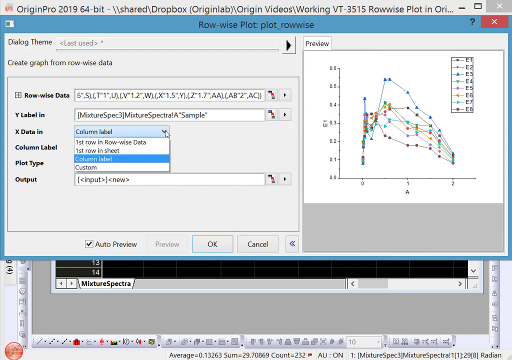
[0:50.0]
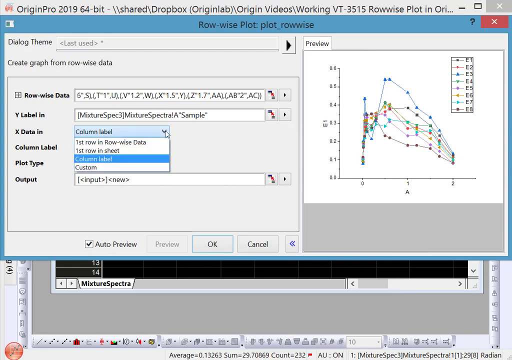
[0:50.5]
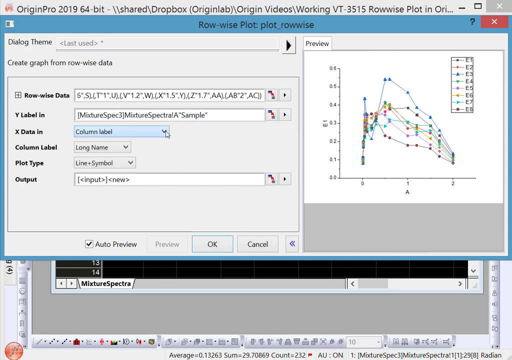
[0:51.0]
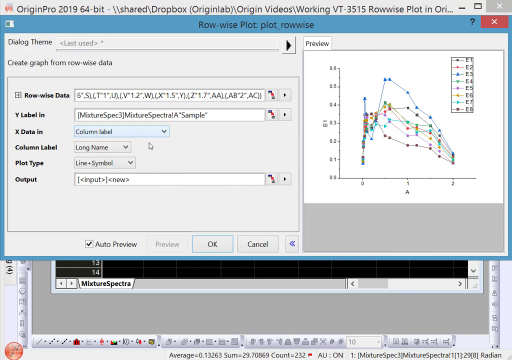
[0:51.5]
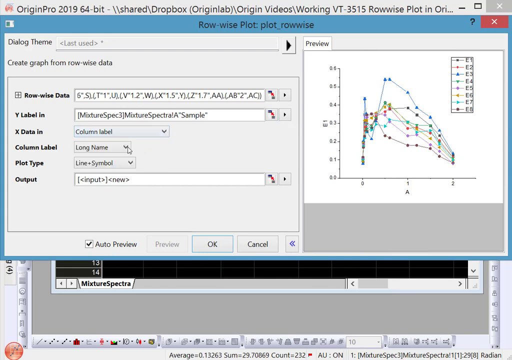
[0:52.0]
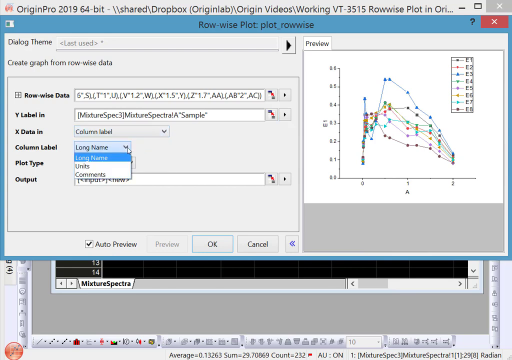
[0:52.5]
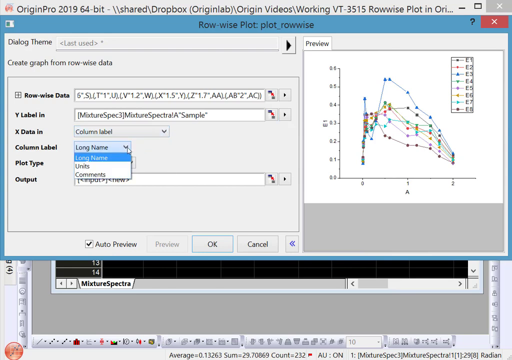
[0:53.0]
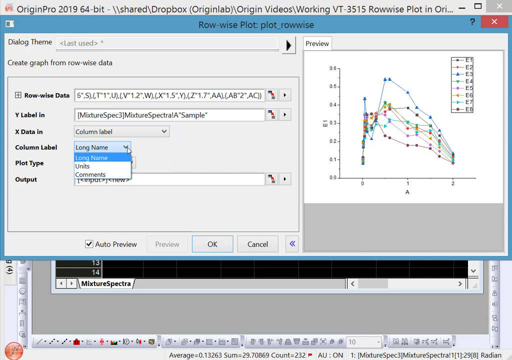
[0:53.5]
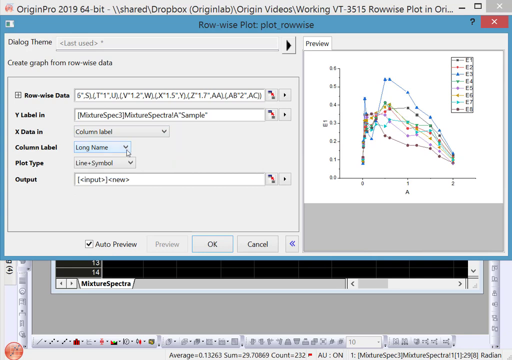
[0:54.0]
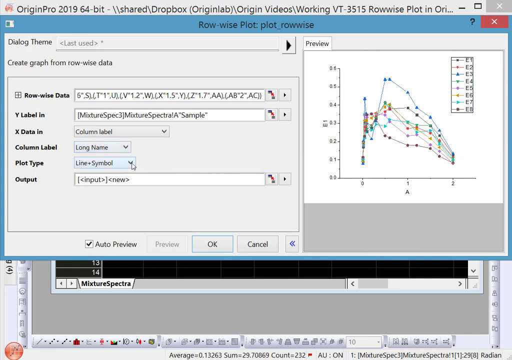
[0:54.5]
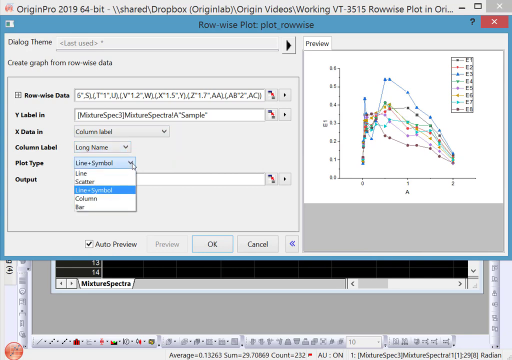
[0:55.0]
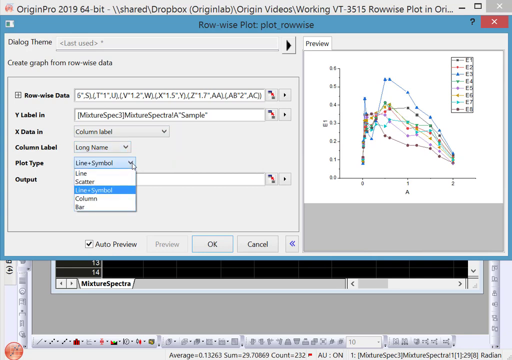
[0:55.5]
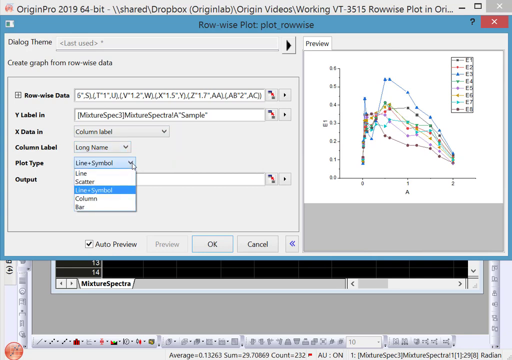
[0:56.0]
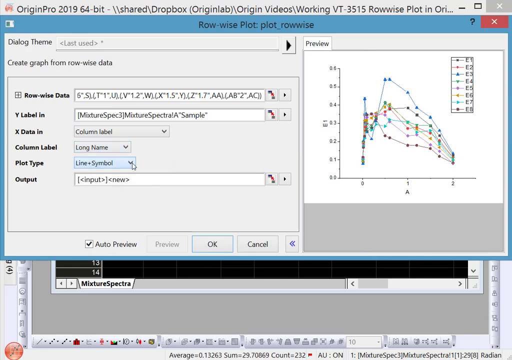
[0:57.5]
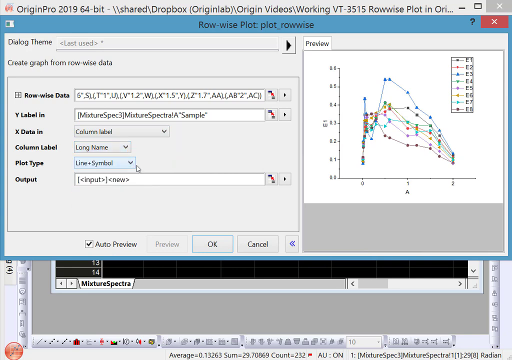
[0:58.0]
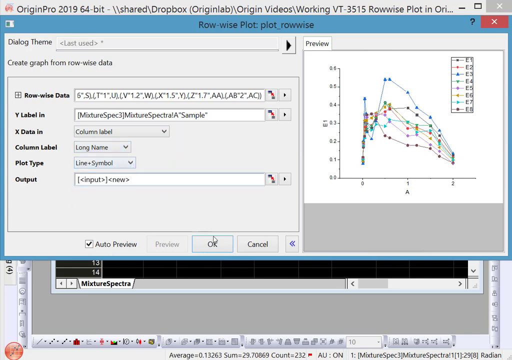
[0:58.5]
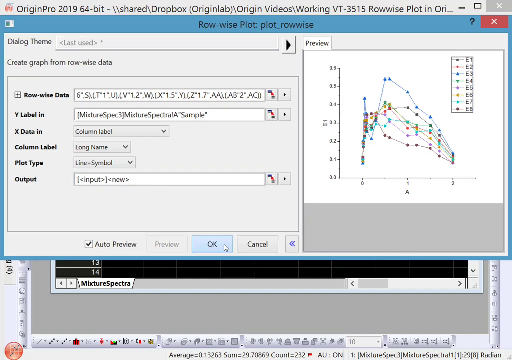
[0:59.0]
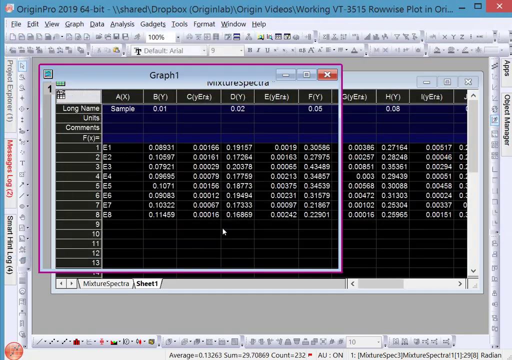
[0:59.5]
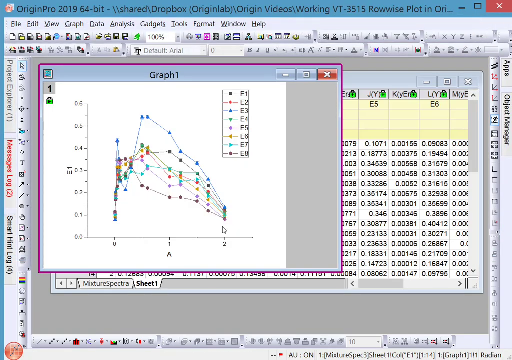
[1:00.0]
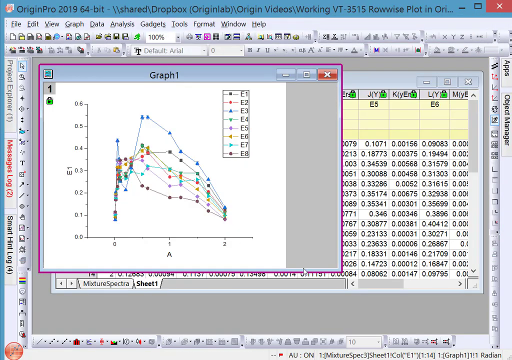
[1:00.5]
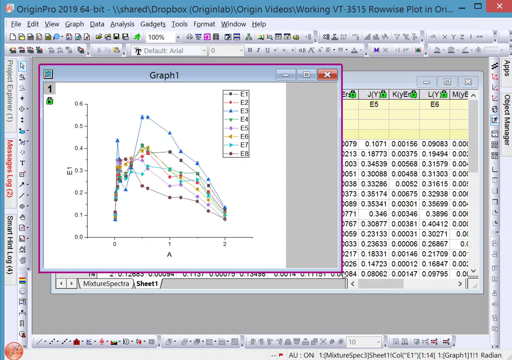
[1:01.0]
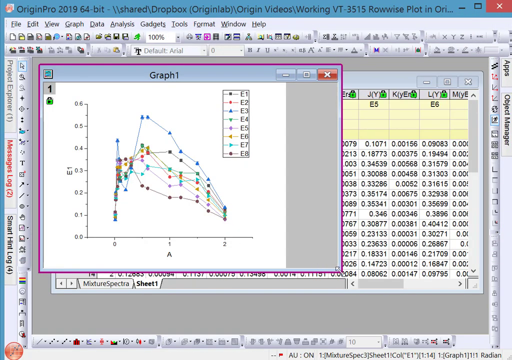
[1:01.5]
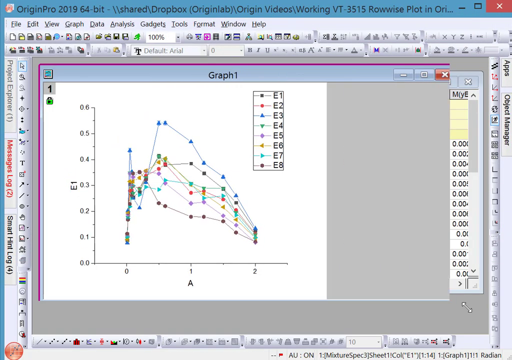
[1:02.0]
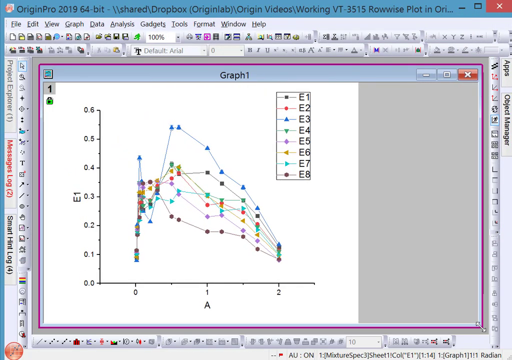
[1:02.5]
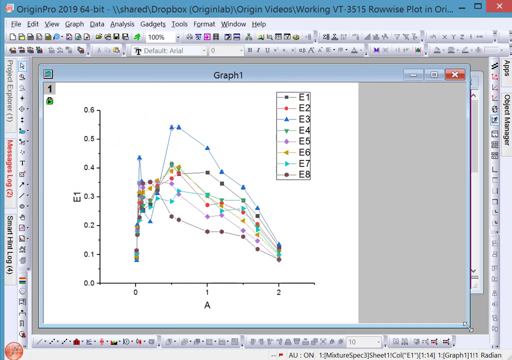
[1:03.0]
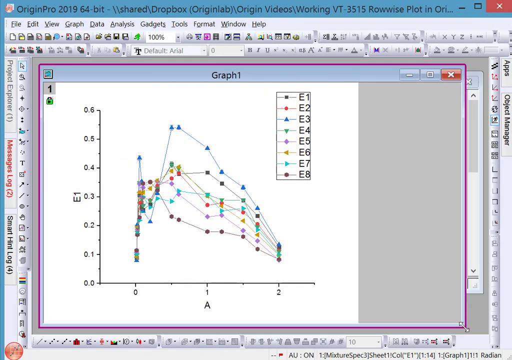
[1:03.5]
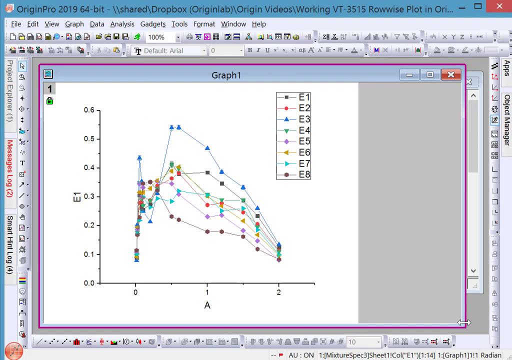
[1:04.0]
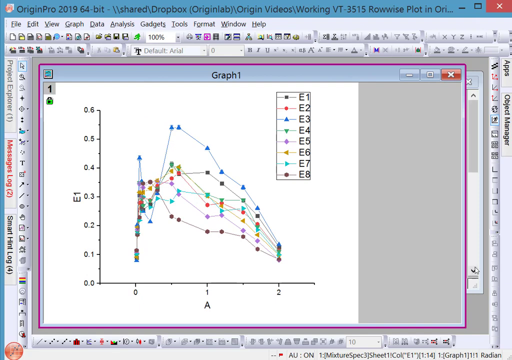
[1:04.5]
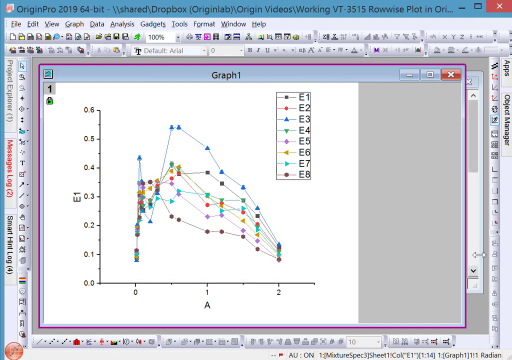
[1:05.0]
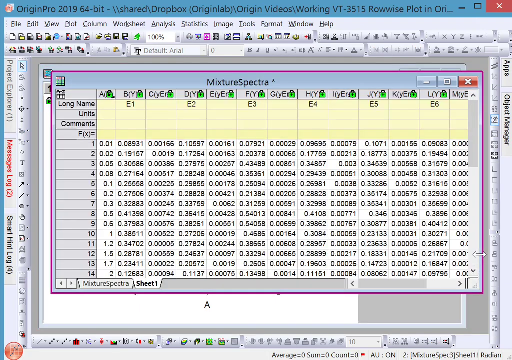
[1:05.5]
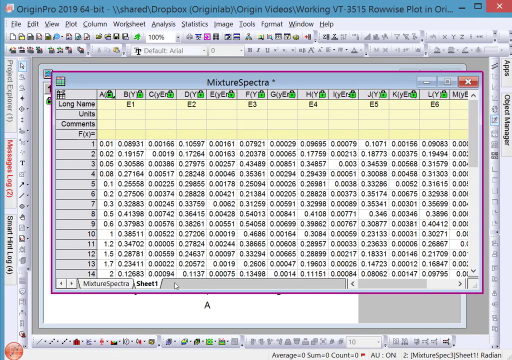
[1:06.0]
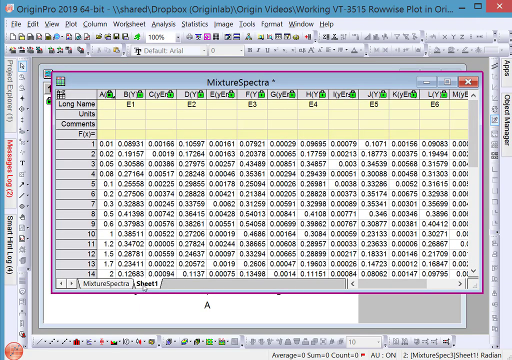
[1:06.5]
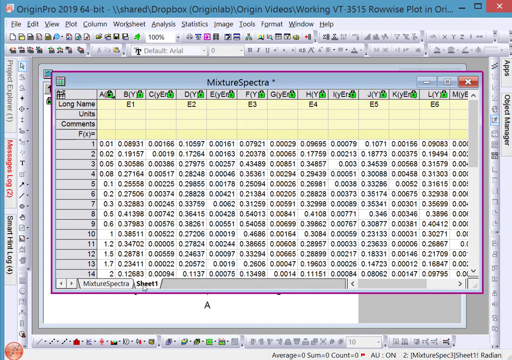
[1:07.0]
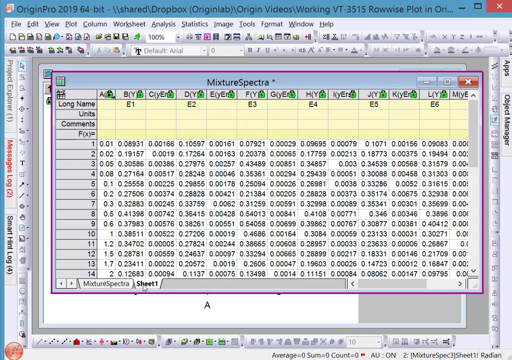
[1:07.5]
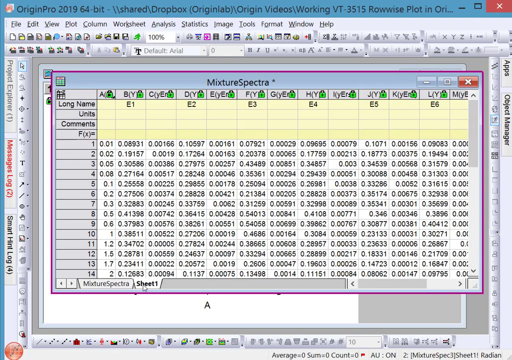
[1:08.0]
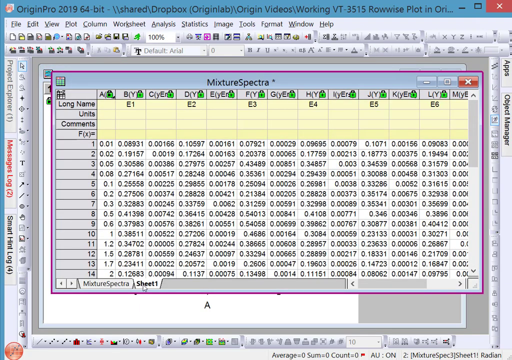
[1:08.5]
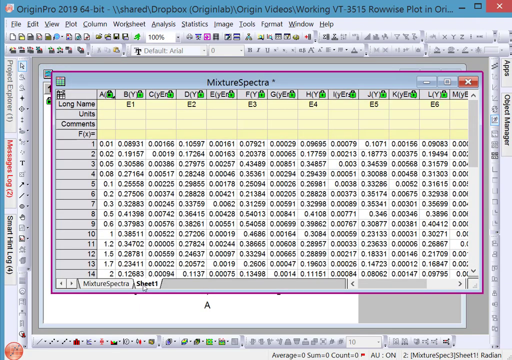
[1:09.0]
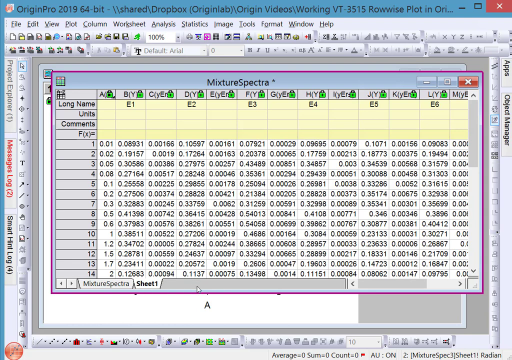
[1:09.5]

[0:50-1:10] A pop-up titled 'row-wise plot: plot _rowwise' is open. The cursor is over a drop-down menu called 'x data', in which 'Column Label' is currently selected and highlighted in blue. The drop-down menu closes, and the cursor moves down to open a different drop-down menu just below, labelled 'Column Label', which is set to 'Long Name'; it is briefly opened and then closed. The cursor then moves down to a drop-down menu titled 'Plot Type', currently set to 'Line and Symbol', which is opened and closed again. The cursor moves down to the right and clicks an OK button. The pop-up closes and a graph titled Graph 1 opens, showing a line graph with many plotted points labelled E1 through E8. The cursor drags the bottom right of the graph diagonally down to the right to enlarge the window, then adjusts it slightly by dragging back to the left. It then clicks outside the window, closing the graph and making a spreadsheet titled Mixture Spectra visible instead. The cursor hovers over a tab at the bottom labelled Sheet 1 before moving away to the bottom right.